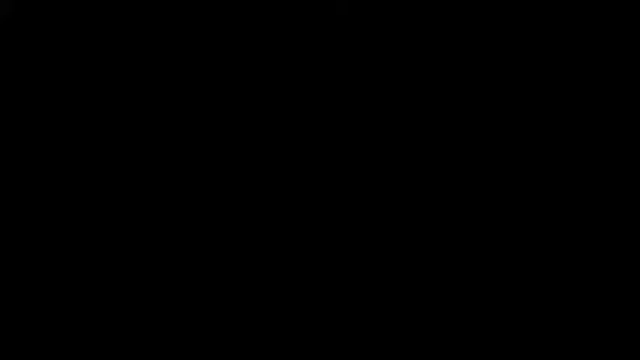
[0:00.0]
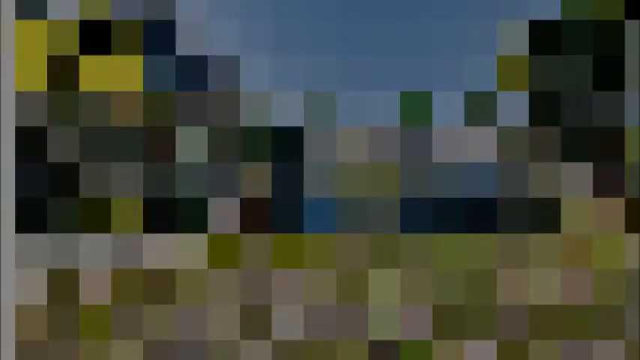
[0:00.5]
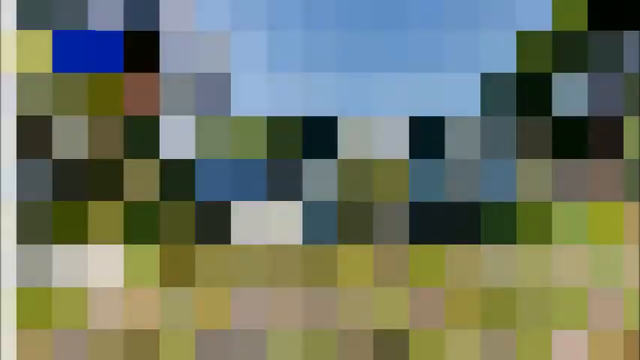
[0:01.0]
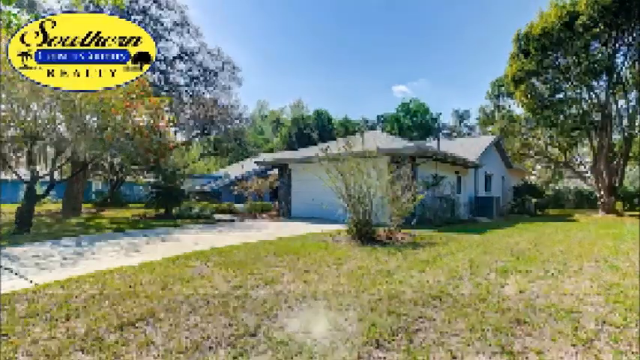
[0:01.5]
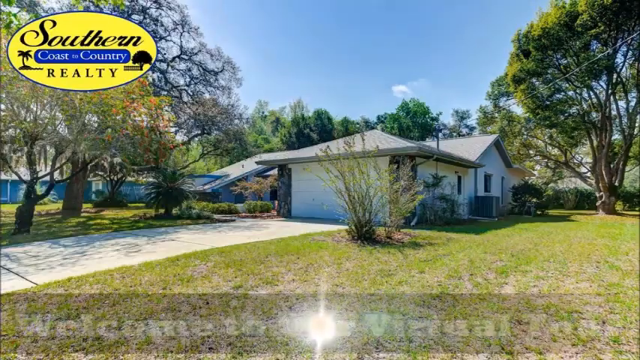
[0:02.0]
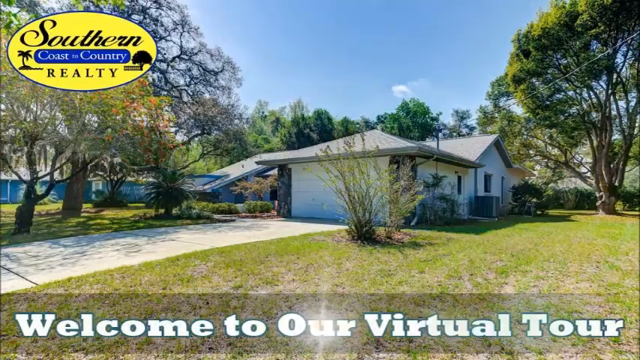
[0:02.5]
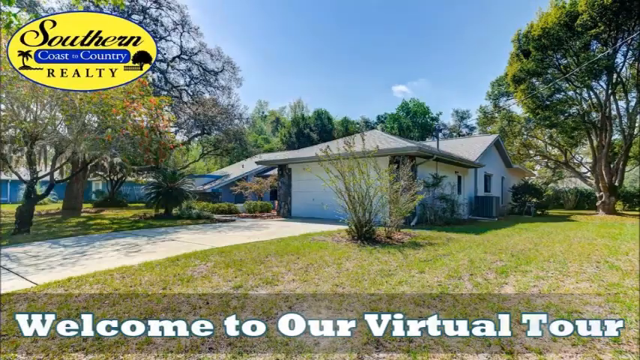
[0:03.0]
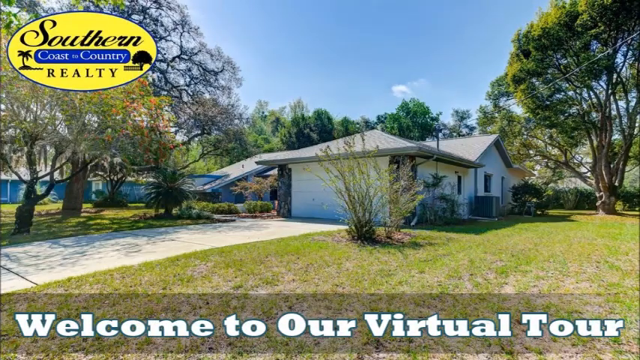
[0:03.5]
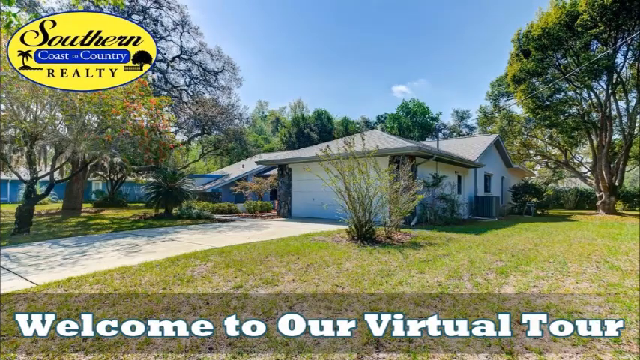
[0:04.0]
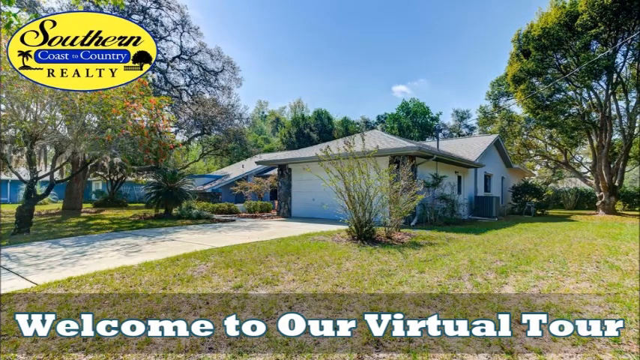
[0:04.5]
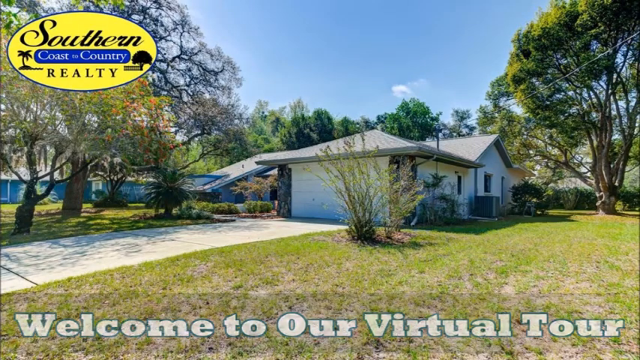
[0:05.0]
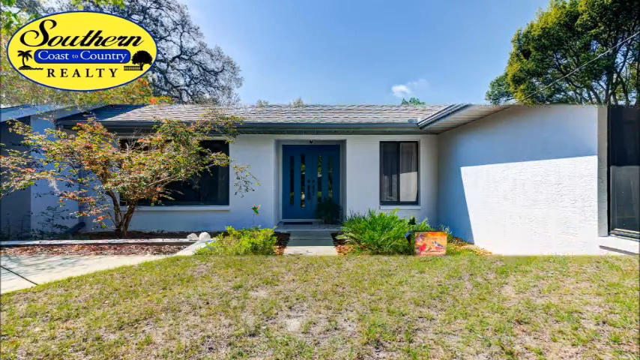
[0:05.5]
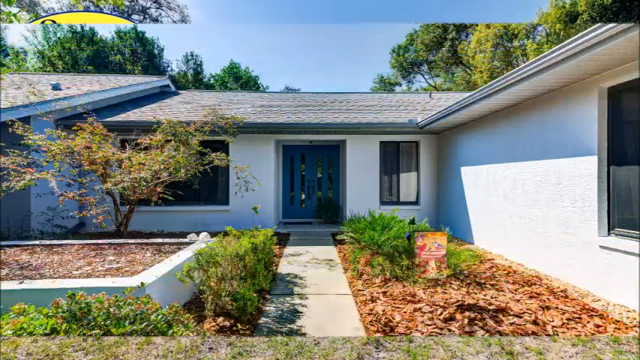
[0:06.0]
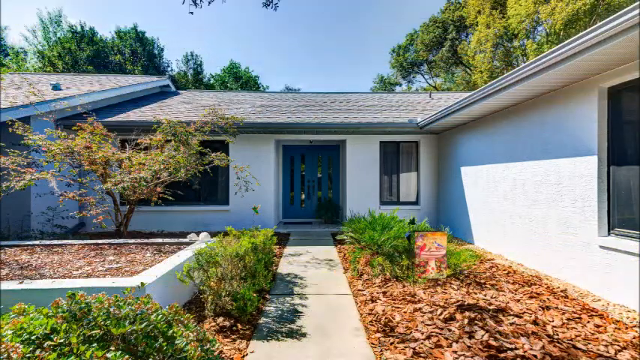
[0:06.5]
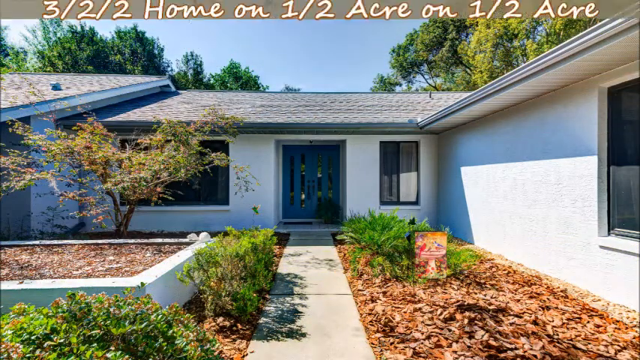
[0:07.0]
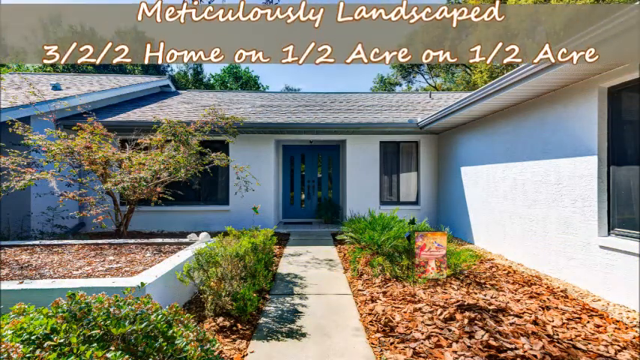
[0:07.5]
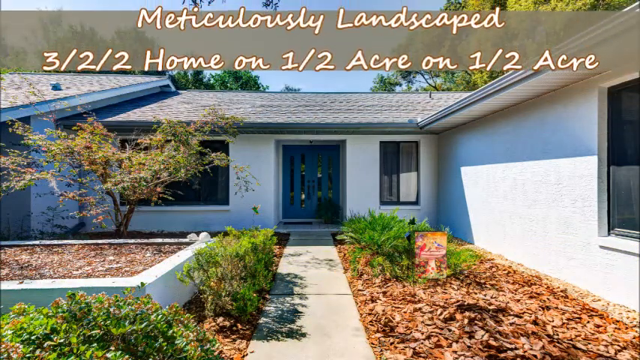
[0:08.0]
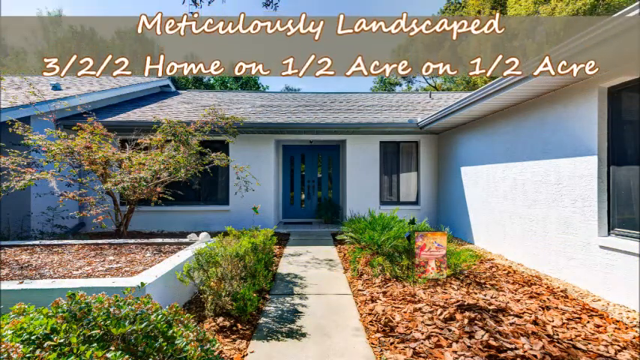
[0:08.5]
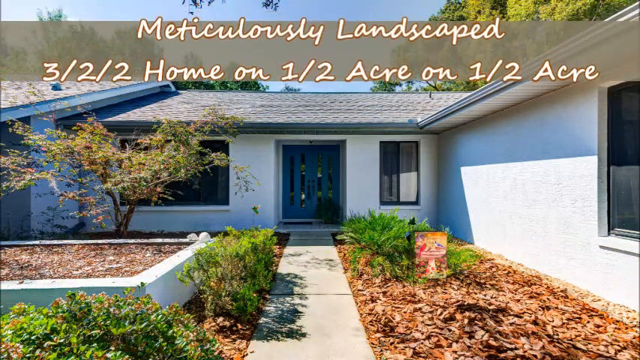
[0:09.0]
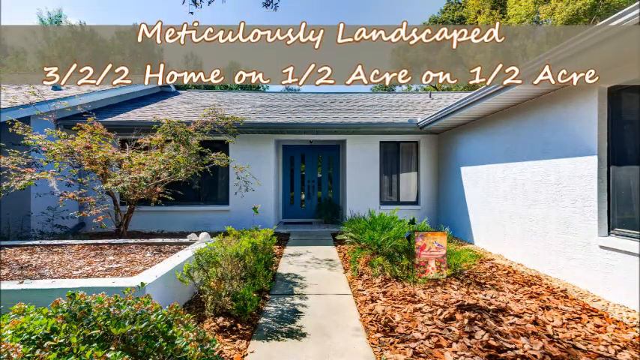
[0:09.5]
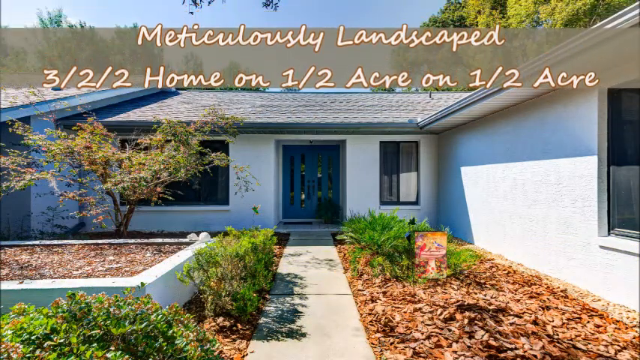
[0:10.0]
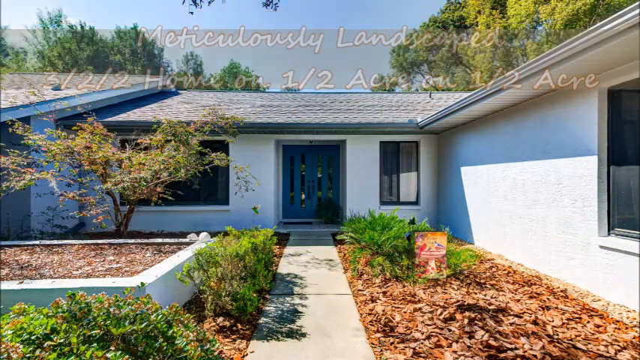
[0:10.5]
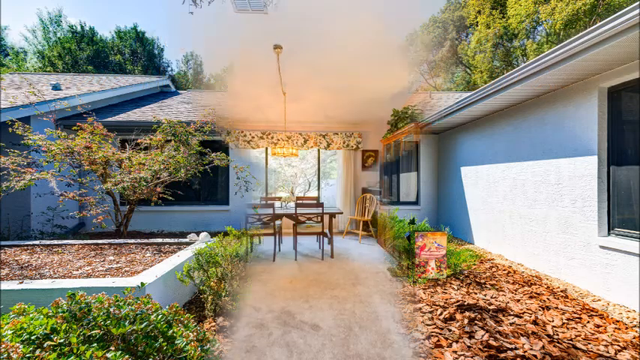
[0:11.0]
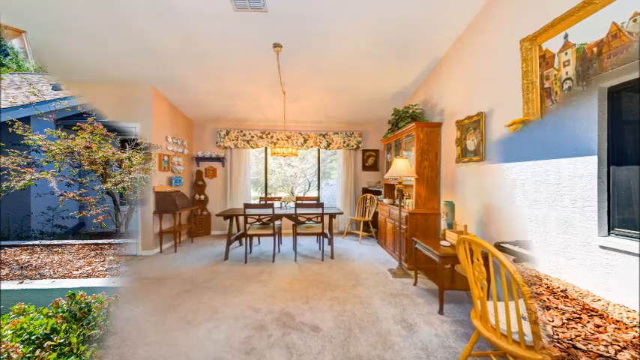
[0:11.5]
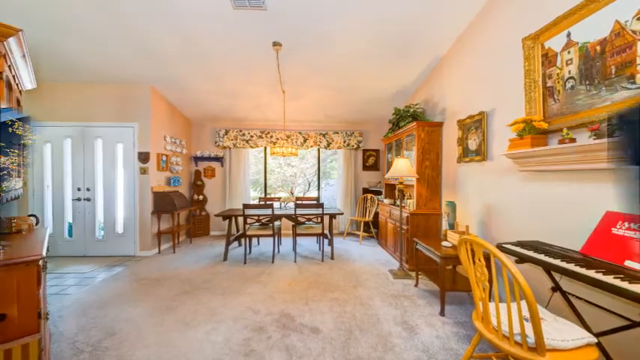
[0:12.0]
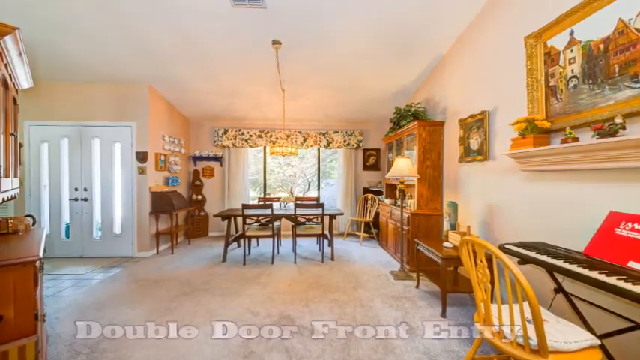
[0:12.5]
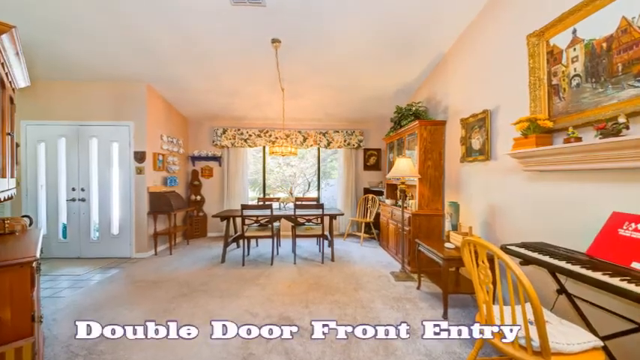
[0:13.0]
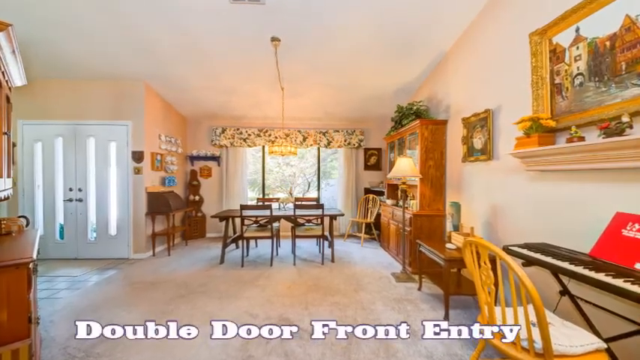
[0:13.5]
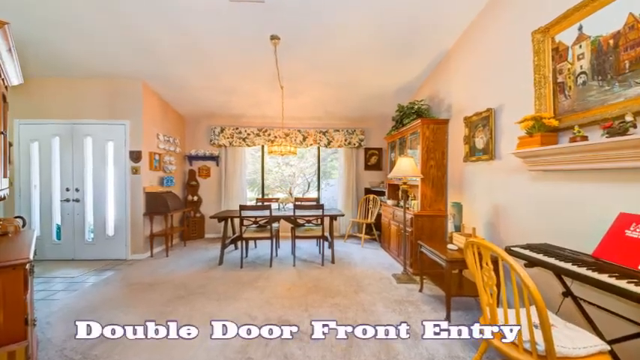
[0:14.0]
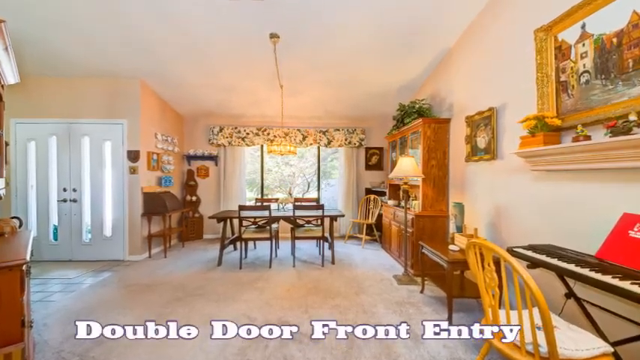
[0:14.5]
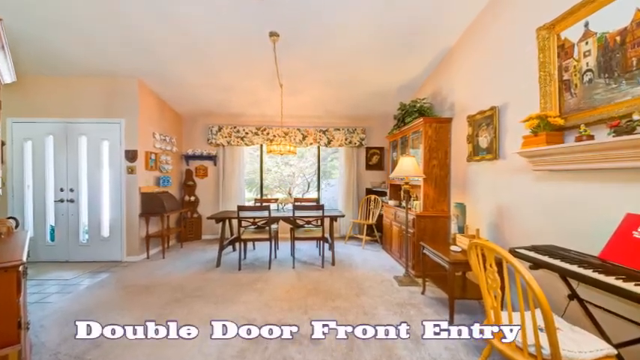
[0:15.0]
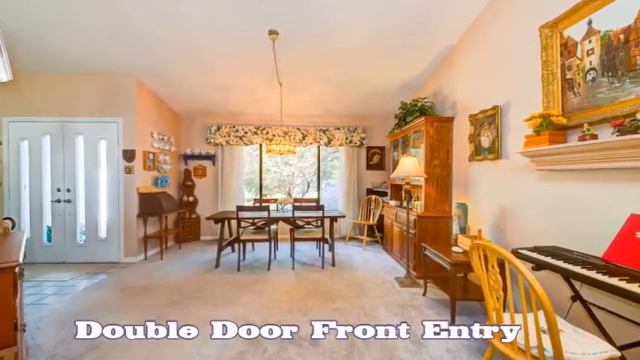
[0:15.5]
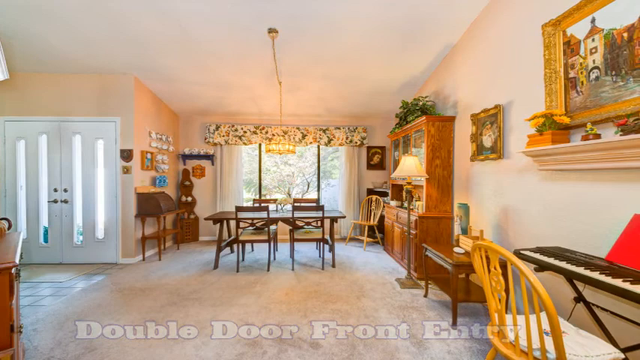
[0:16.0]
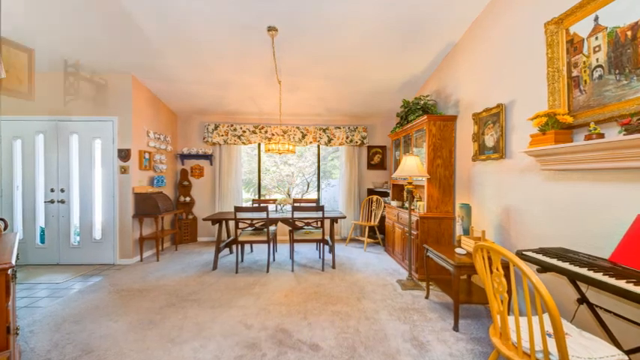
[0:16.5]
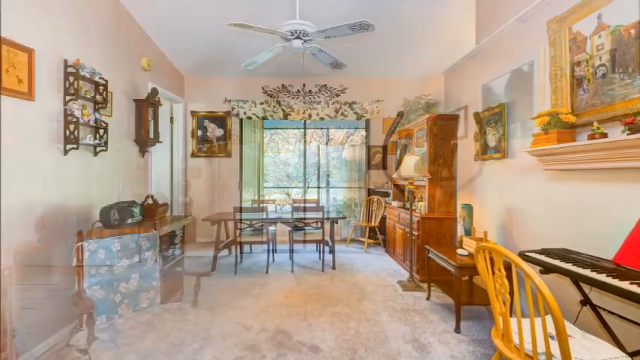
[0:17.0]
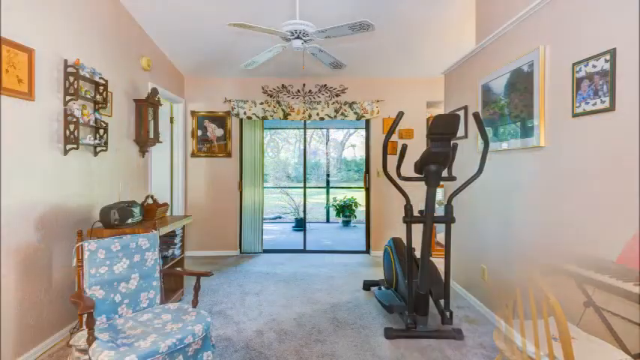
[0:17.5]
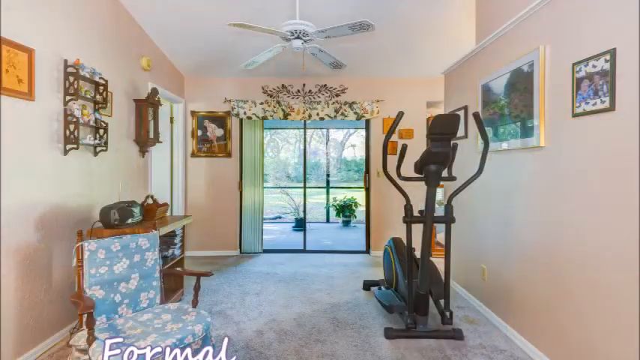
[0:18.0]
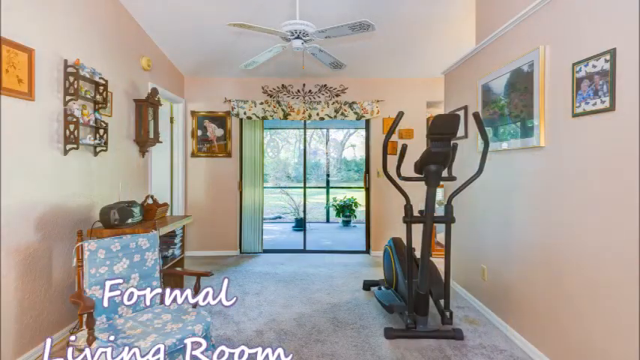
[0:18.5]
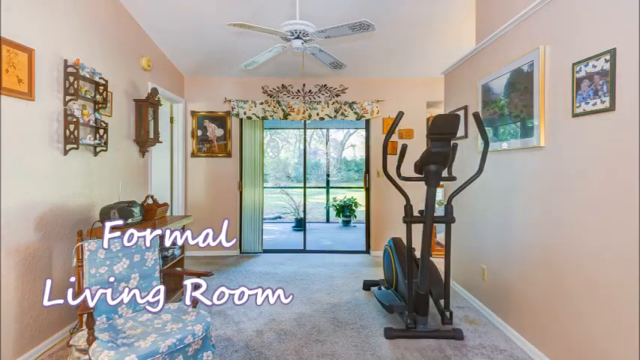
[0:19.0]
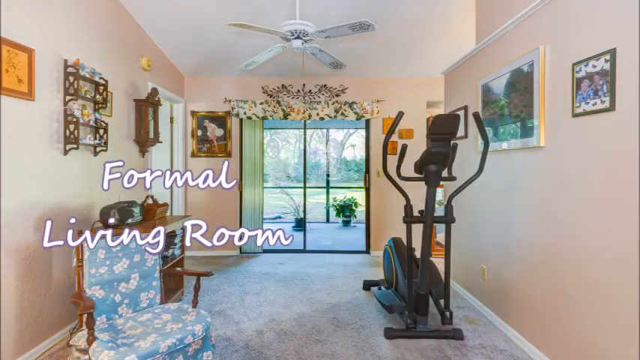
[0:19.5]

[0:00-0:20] The video is a Southern Coast to Country Realty virtual open house, apparently an online tour that moves through the different parts of the house. It opens on a house that is white on the outside with a black roof. Text describes a three, two, two home and reads "on half an acre." The landscaping is visible: nice mulch with a couple of green plants and a tree in front of the house. The view then pans to the inside of the house. There appears to be an area with a table next to the doorway, and there is a lot of wood furniture, an electronic keyboard up against the wall, and some pictures on the wall. The space designed as a formal living room is not set up as one; it has been turned into a home gym, with what looks like possibly an elliptical in it. A beige-colored carpet runs throughout the house.